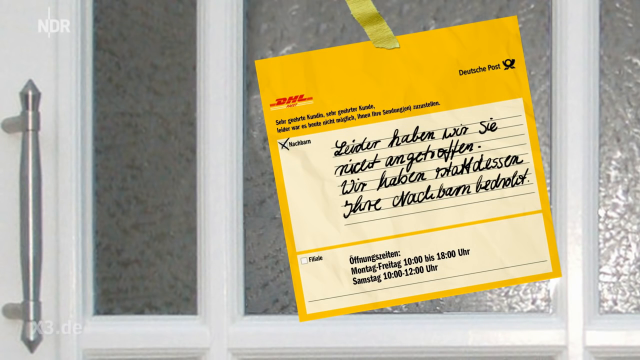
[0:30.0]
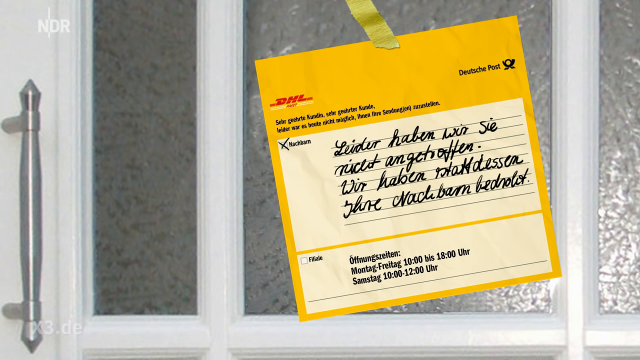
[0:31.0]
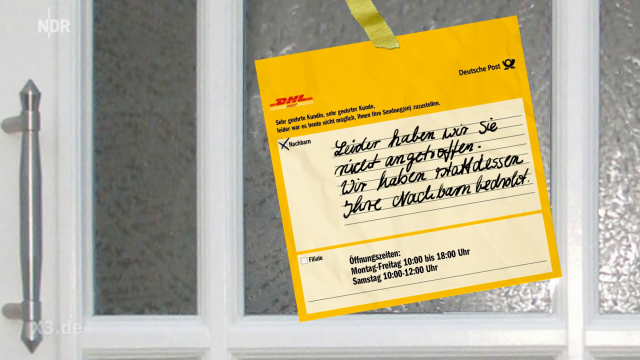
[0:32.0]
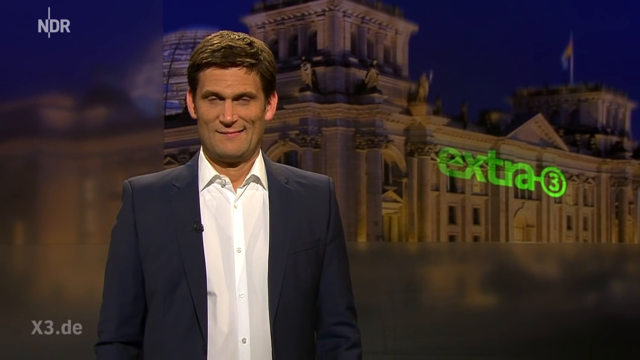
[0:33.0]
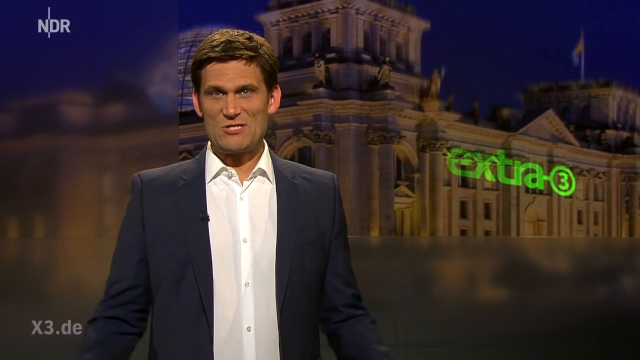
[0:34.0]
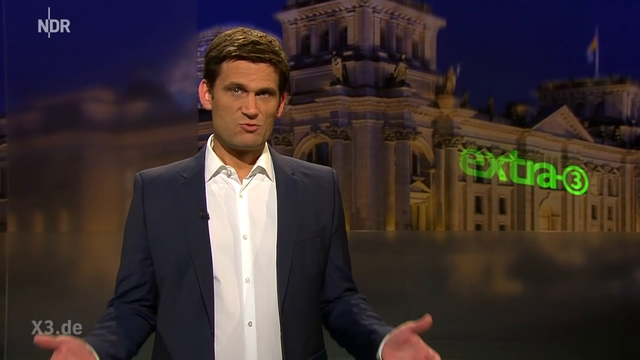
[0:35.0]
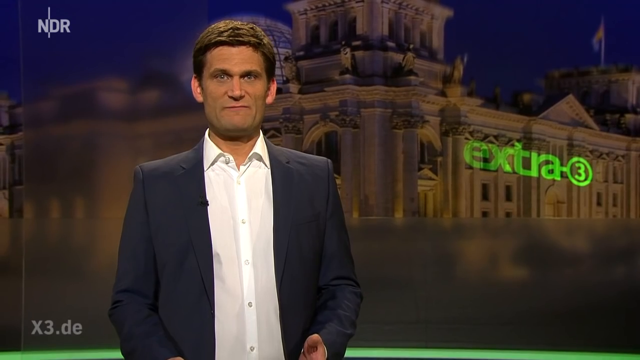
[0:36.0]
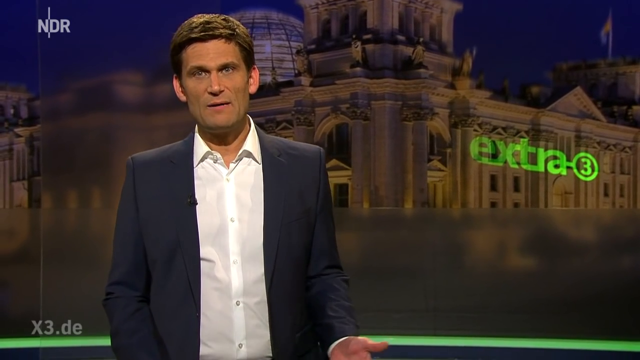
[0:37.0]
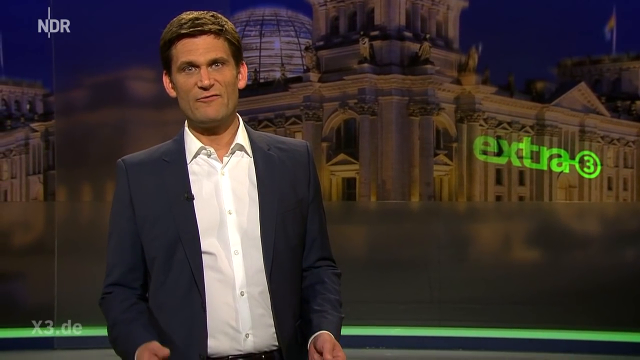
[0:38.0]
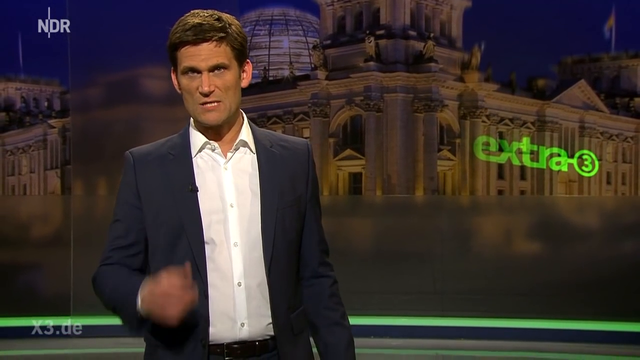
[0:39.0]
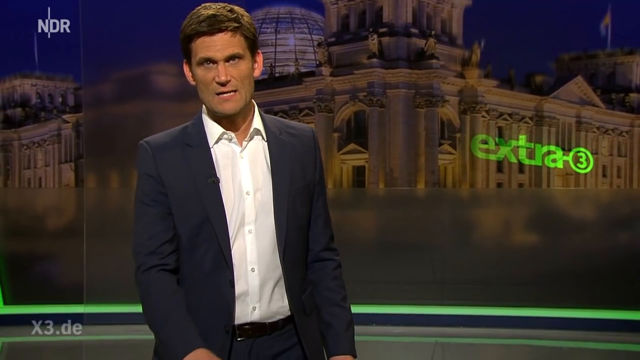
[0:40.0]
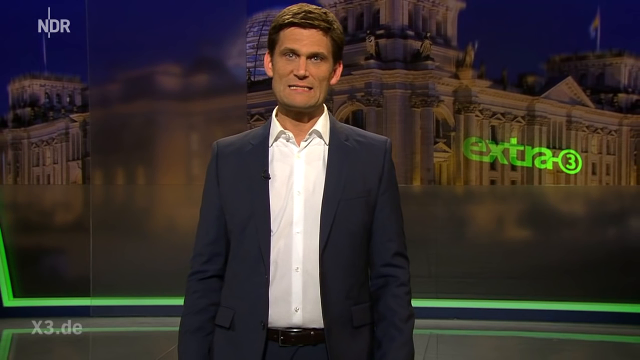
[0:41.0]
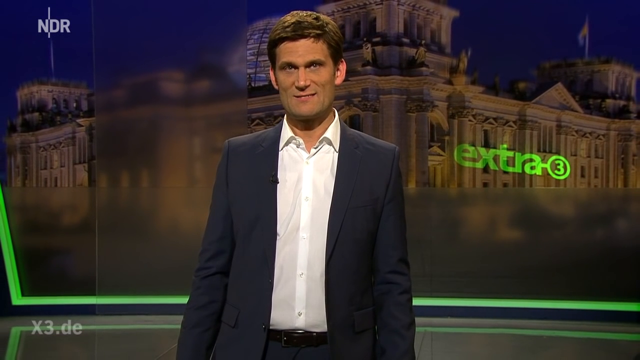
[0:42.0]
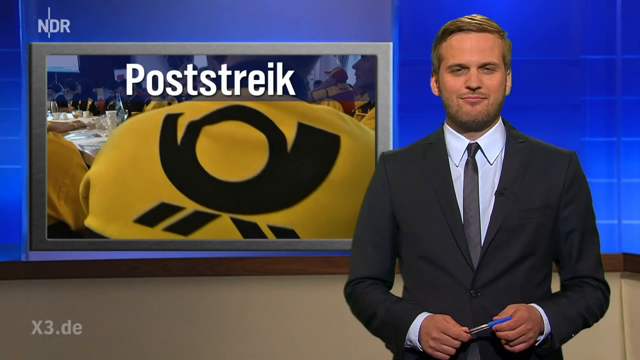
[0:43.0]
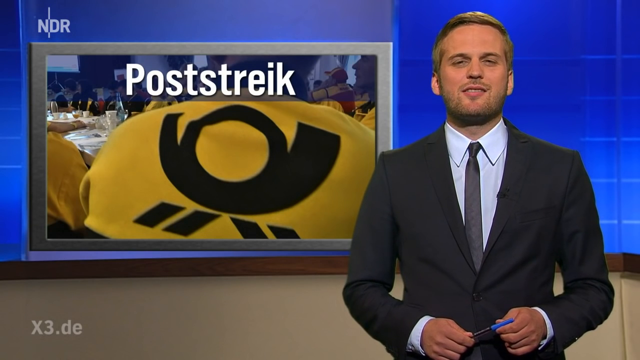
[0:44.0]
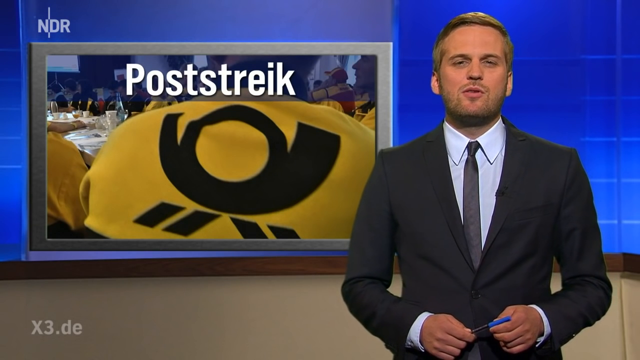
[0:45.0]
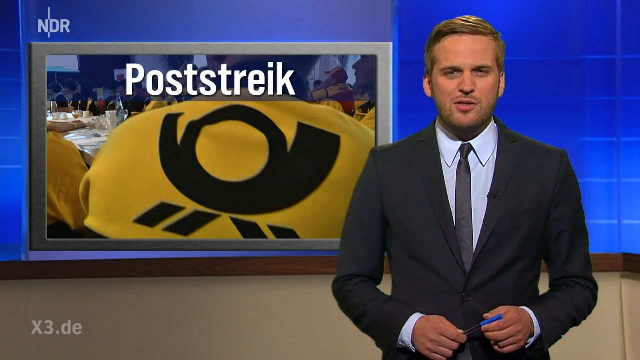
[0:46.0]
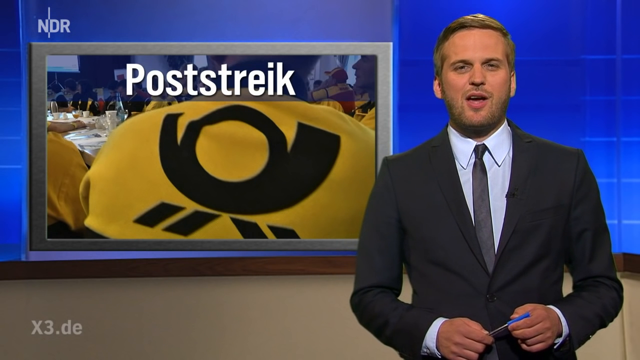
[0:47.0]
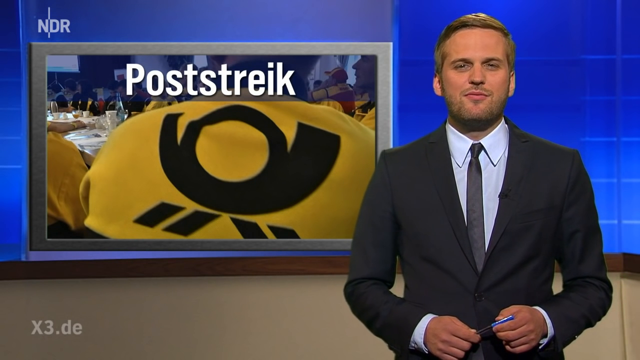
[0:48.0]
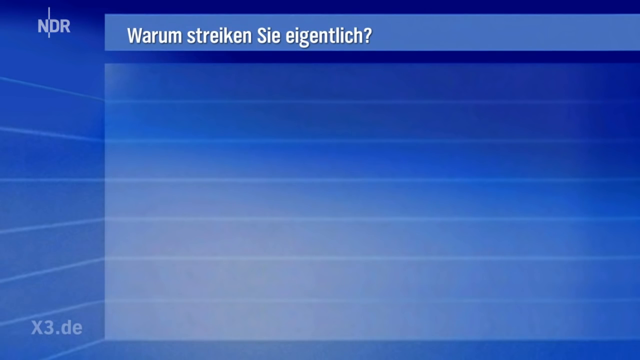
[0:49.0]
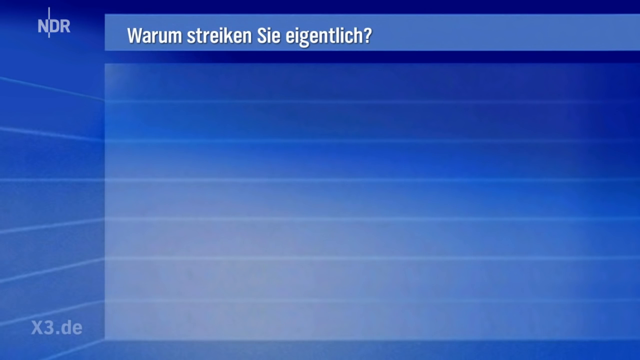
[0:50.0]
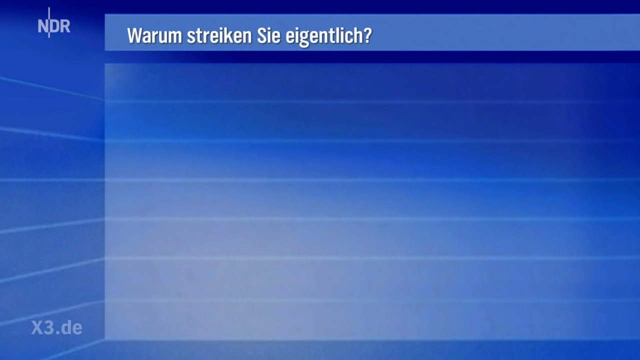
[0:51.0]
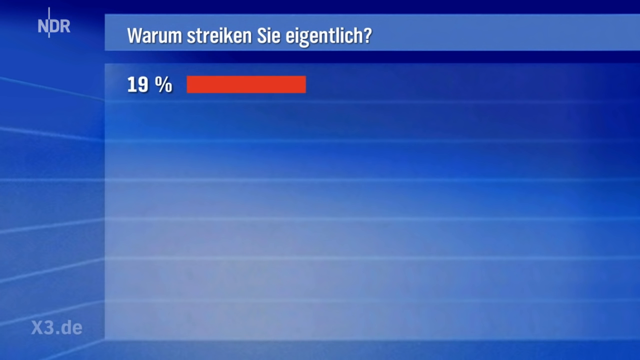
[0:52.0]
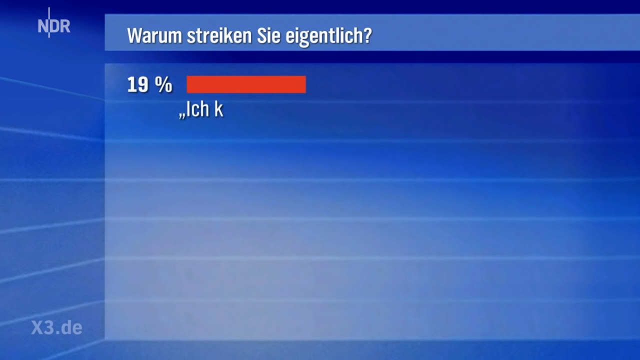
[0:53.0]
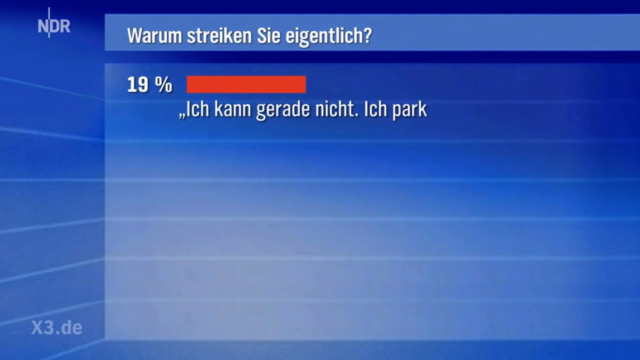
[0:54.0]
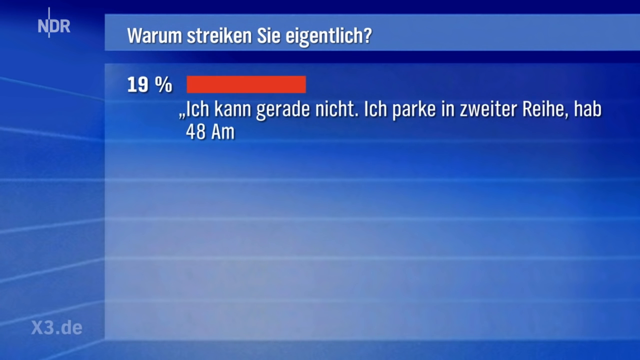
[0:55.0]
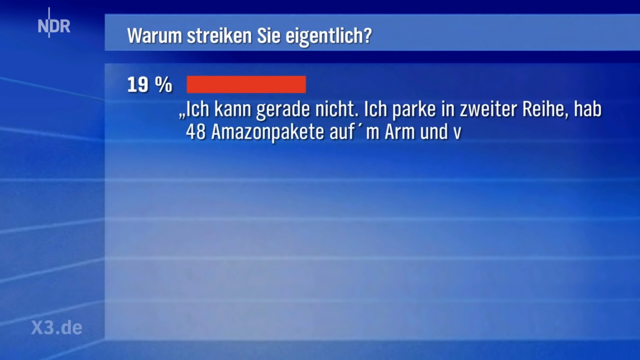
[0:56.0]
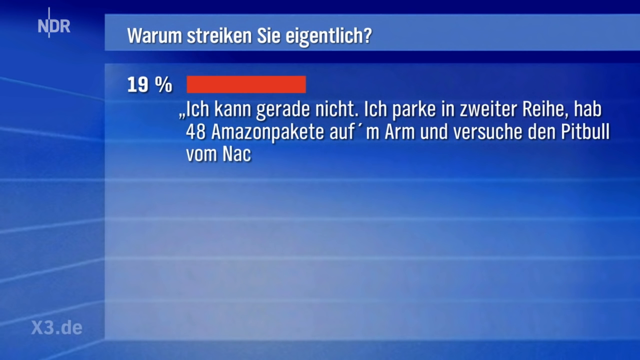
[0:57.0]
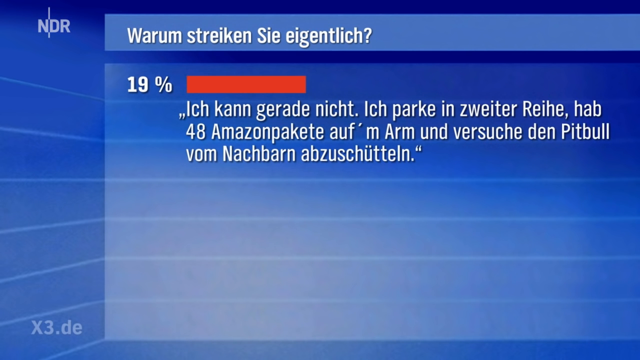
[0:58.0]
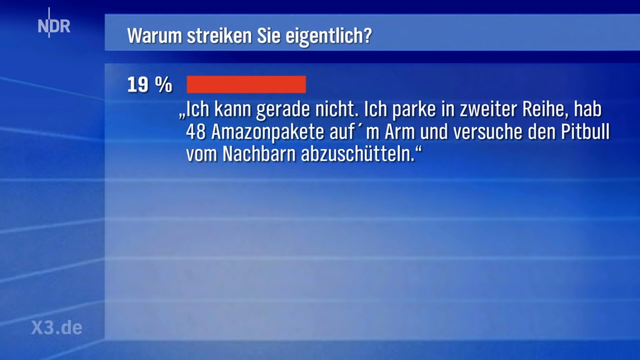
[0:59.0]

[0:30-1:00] A bright yellow DHL tag is shown, with the letters "DHL" in red in the upper left corner. Words in a foreign language are written on it in what looks like black sharpie, and two more rows above that are printed on the tag itself. The video returns to Christian, whose last name begins with E; as he talks he lifts his palms, sometimes both at once and sometimes one. It then cuts to another news reporter on the right side of the screen, wearing a suit and tie; only his upper body is visible, apparently a blazer, with a light blue shirt. To his left is a monitor reading "Poststreik", followed by a question of four words in a foreign language, ending with a question mark. Below, "19%" appears with a red bar going across, followed by more words in another language, possibly German.